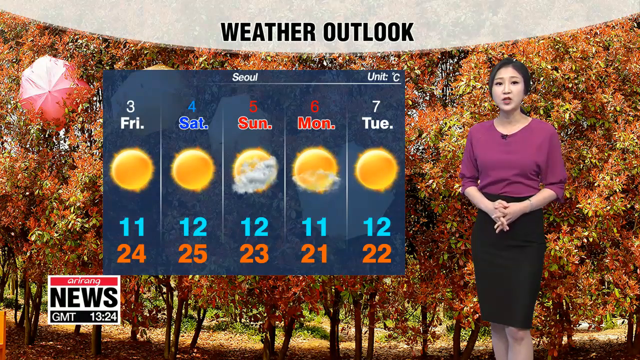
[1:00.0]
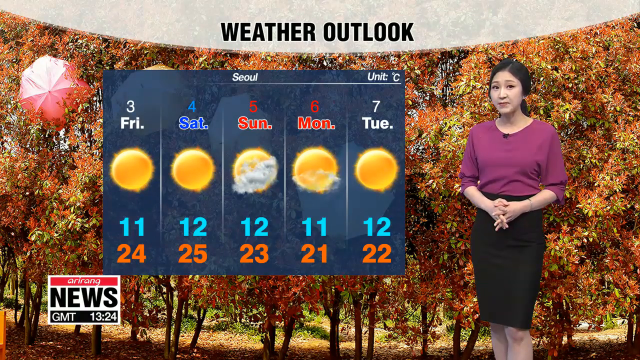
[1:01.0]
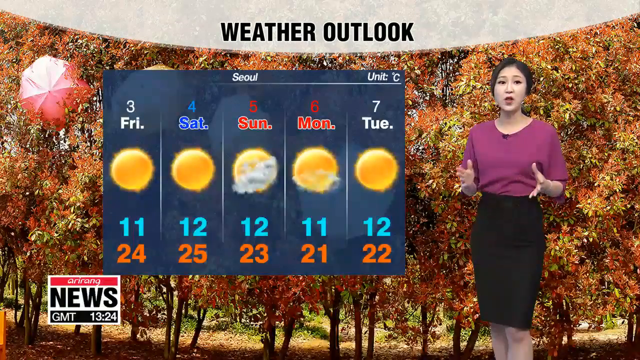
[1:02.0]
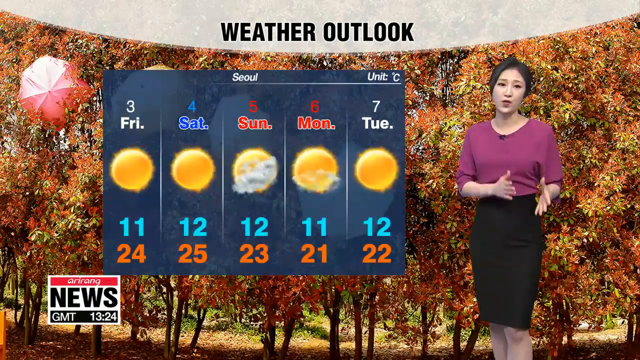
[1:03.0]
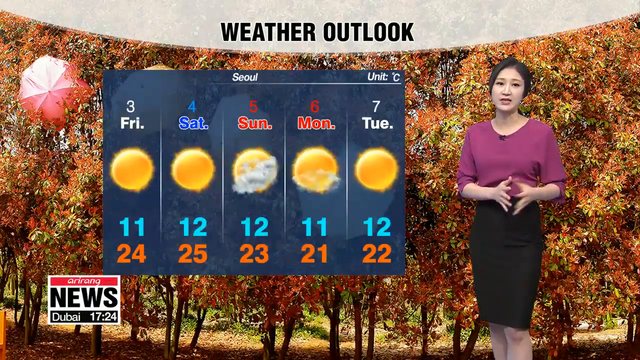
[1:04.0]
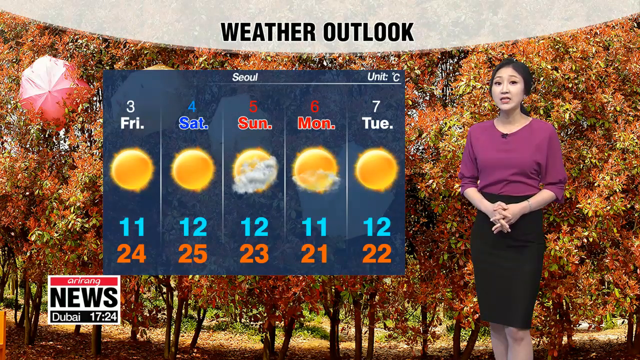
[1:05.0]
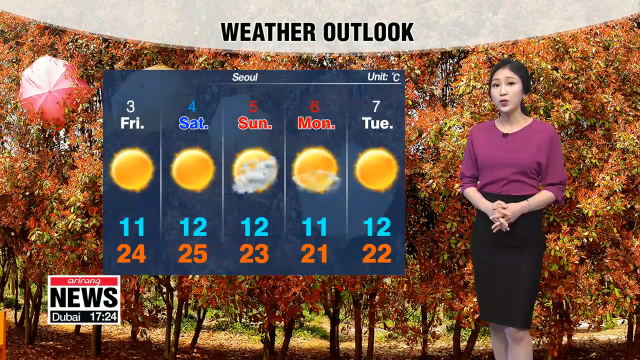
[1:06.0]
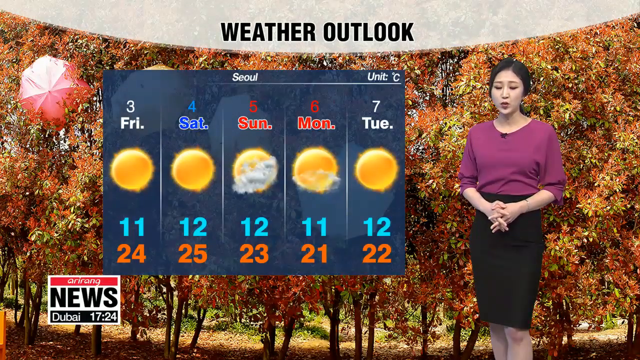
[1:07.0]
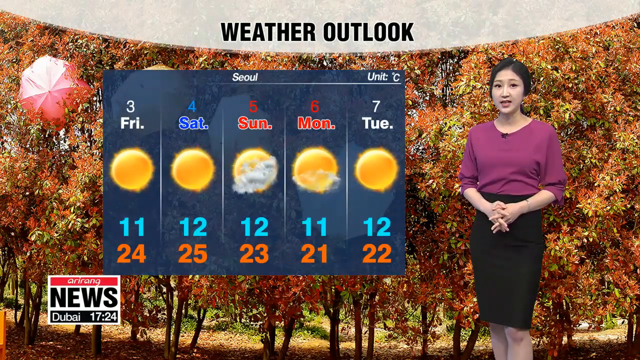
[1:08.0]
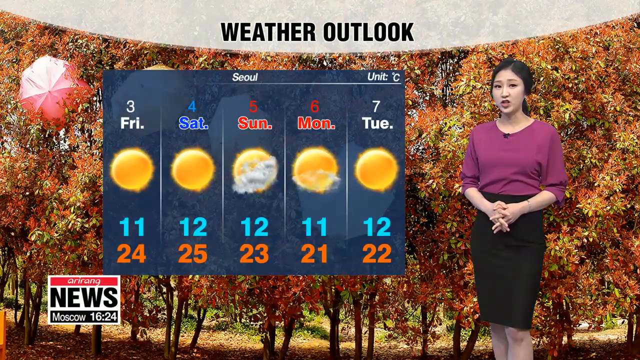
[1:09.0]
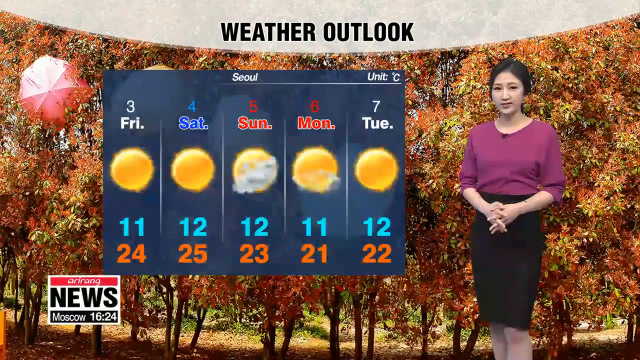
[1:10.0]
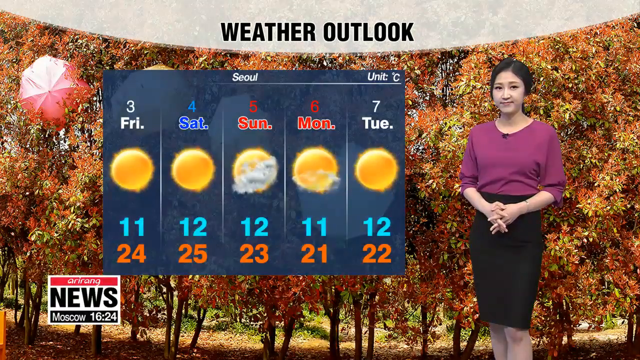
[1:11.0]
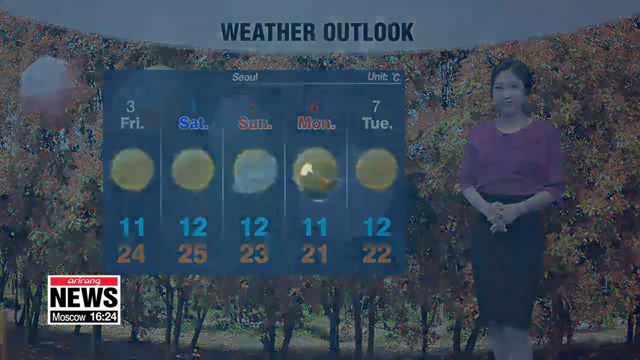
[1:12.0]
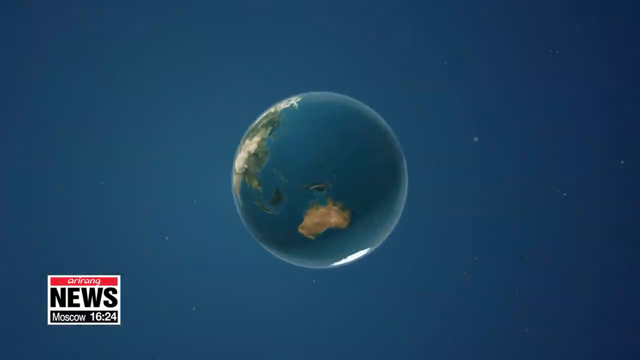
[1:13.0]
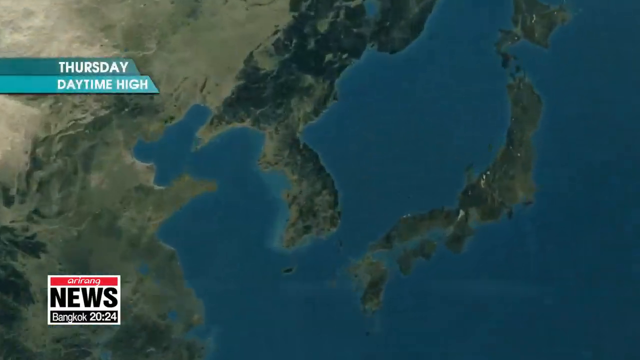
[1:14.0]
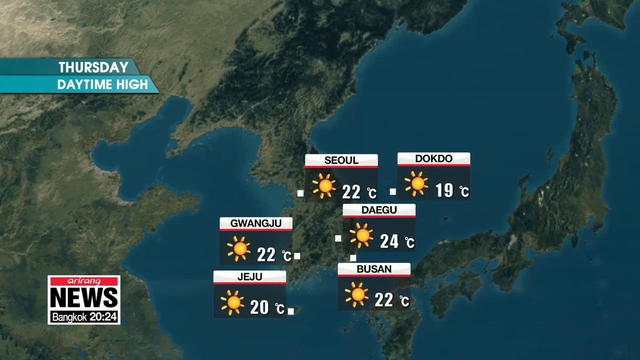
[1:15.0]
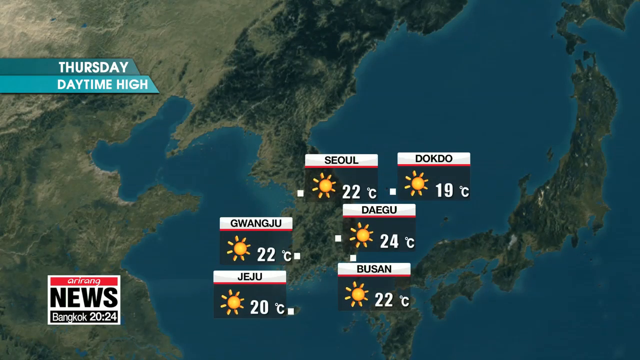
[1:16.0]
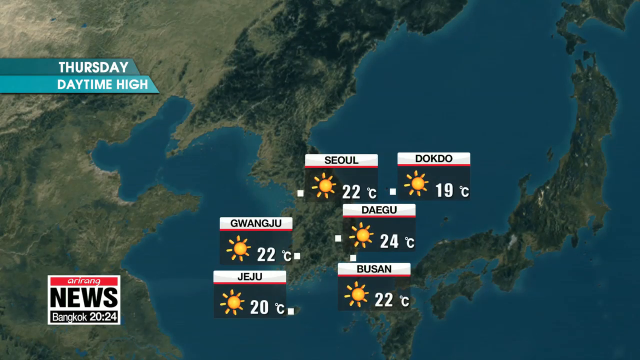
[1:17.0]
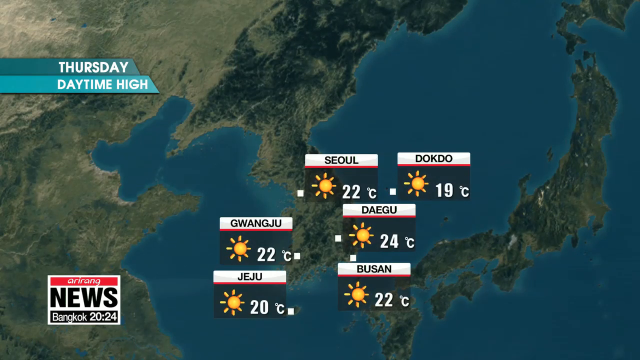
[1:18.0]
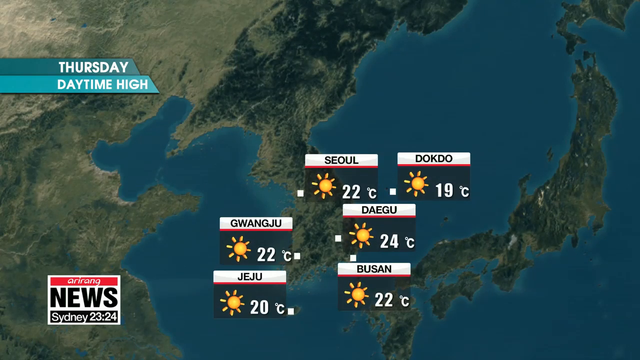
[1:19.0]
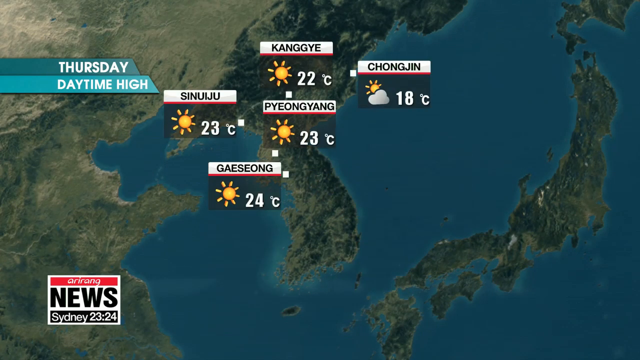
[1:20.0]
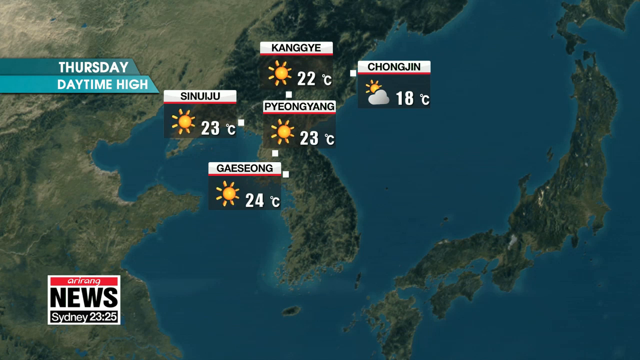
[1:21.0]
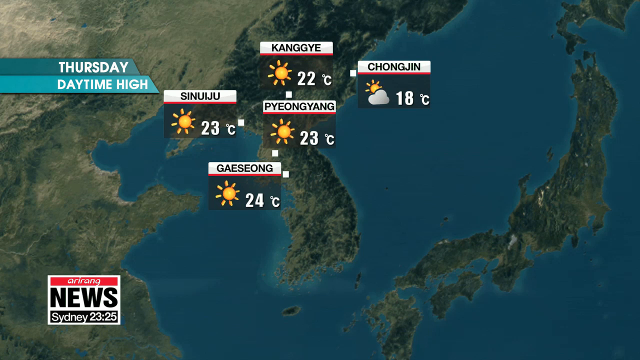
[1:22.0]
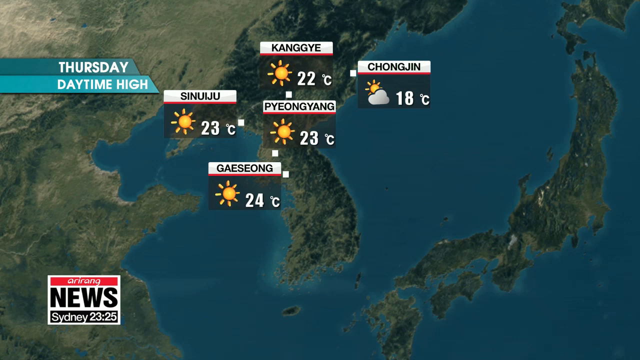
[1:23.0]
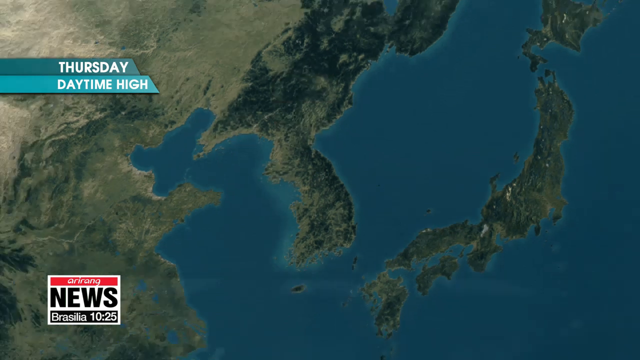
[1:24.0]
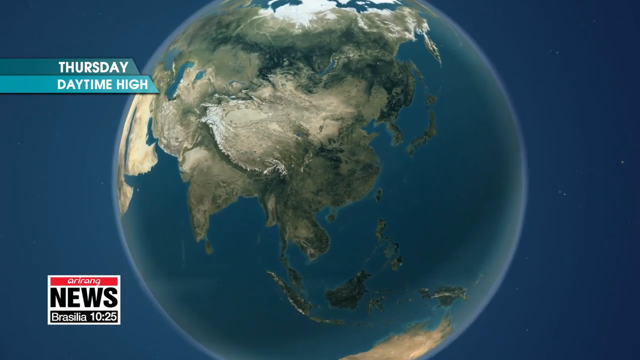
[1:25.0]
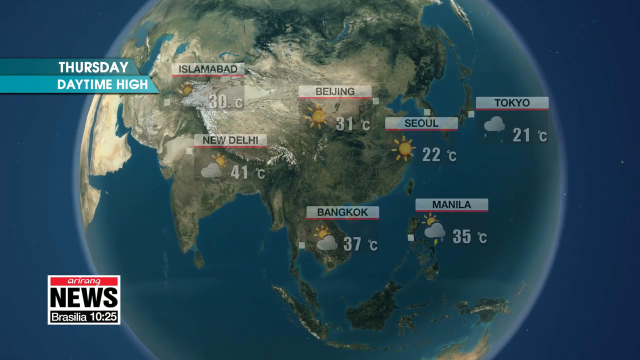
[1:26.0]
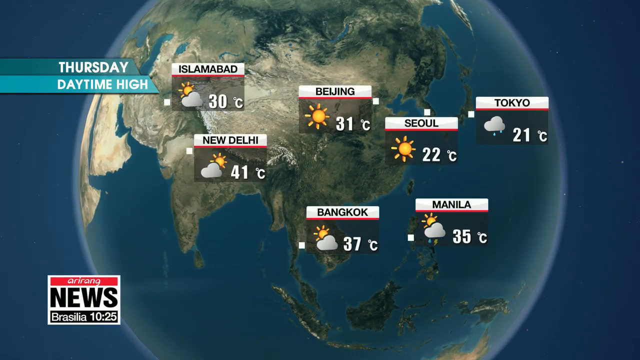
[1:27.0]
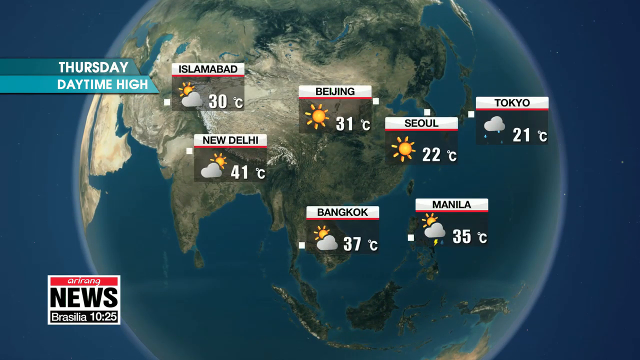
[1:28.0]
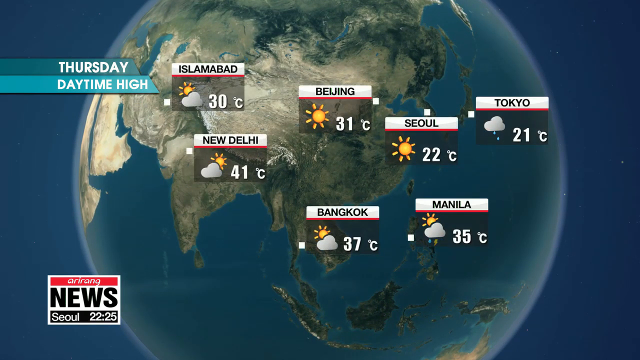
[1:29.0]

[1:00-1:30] The weather outlook shows "3" and Friday in white, "FRI.", with a blazing sun underneath whose rays rise a little and make it look blurry around it. Saturday is in blue and is sunny. Sunday and Monday are in red and look mostly cloudy, and Tuesday is sunny. The woman speaks the whole time. Then an animated globe of the earth rolls toward the viewer and goes into the area of Seoul, with surrounding islands visible to the right and left, across Asia. Text reads "Thursday daytime high", with a couple of blue lines. Temperatures are shown in degrees for several cities, including a top region with five others above another region, and Beijing, Tokyo and a few other cities scattered around Asia, each with its weather.